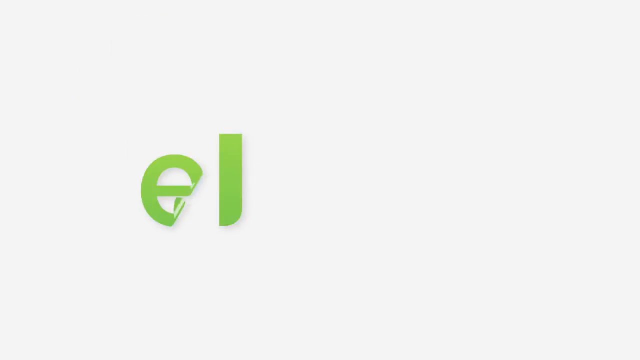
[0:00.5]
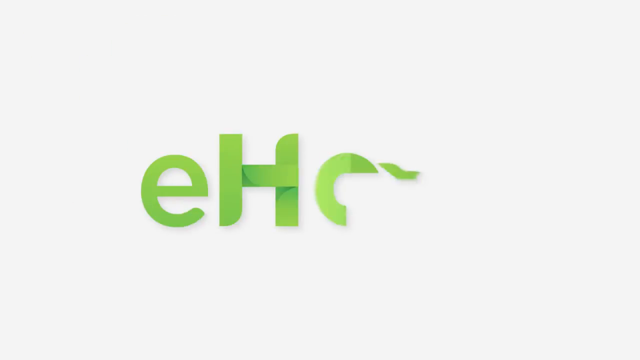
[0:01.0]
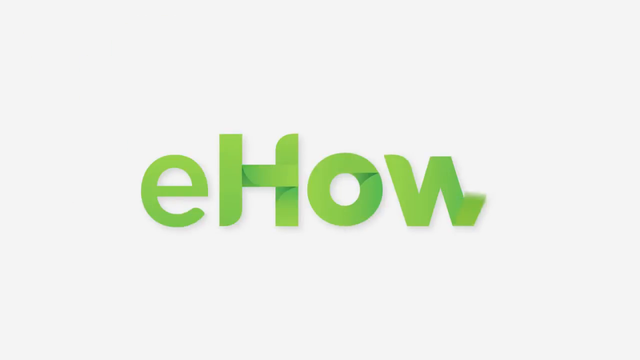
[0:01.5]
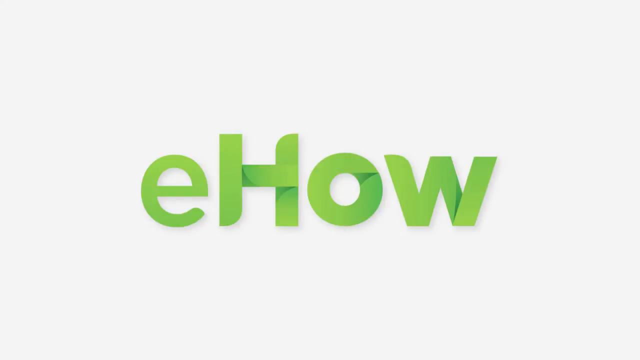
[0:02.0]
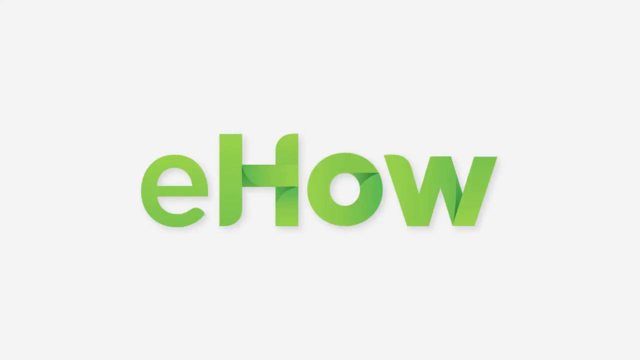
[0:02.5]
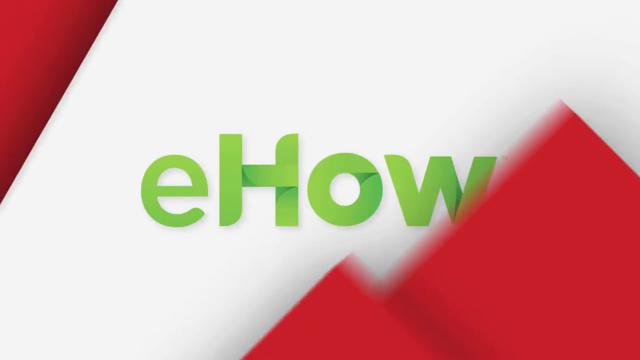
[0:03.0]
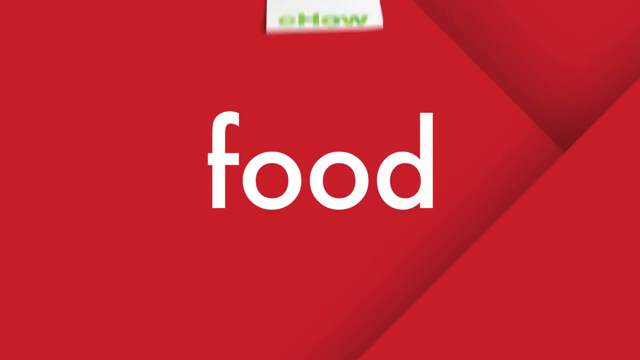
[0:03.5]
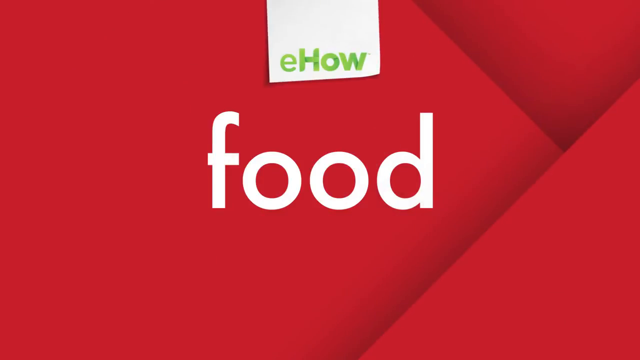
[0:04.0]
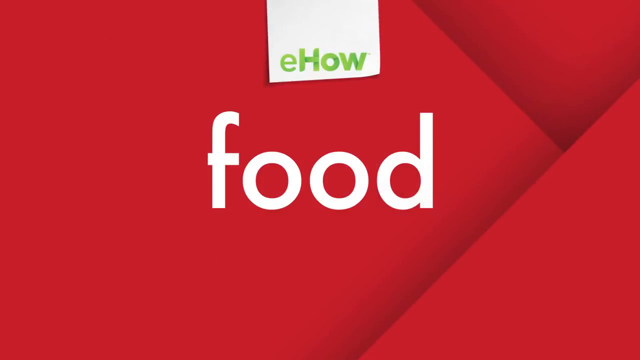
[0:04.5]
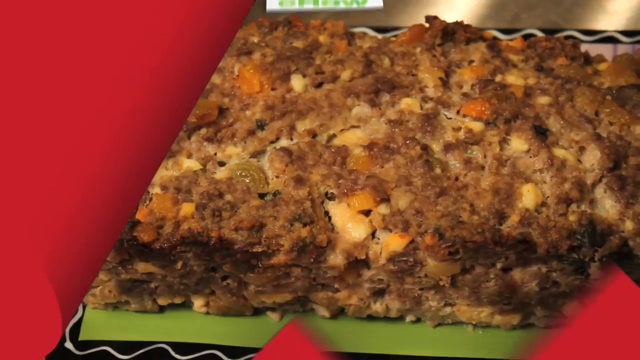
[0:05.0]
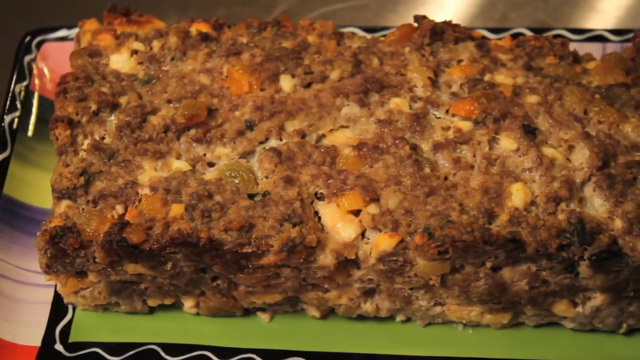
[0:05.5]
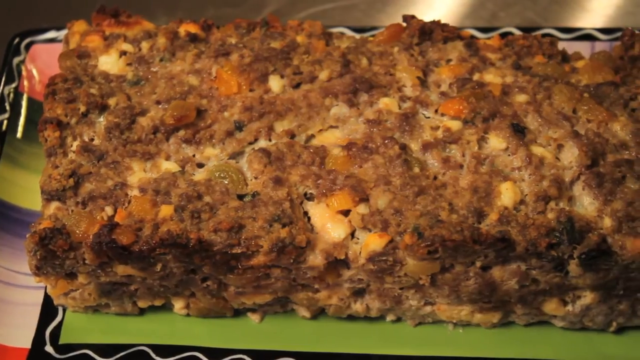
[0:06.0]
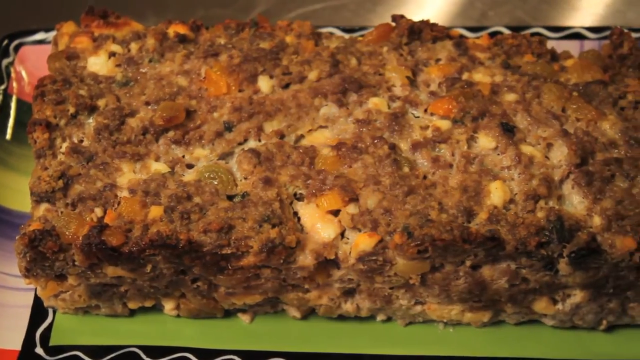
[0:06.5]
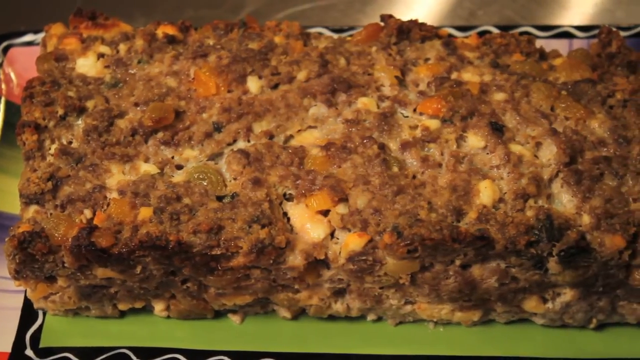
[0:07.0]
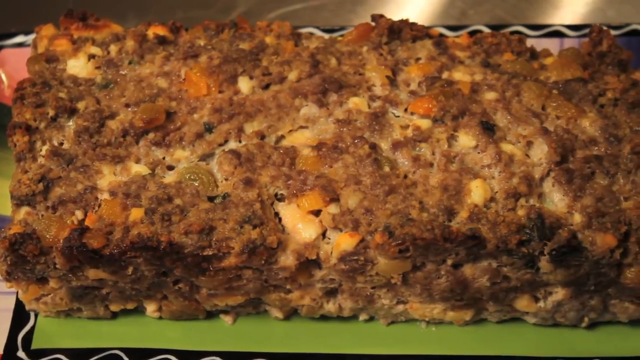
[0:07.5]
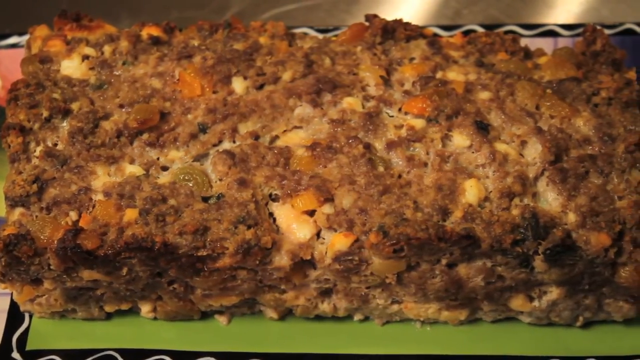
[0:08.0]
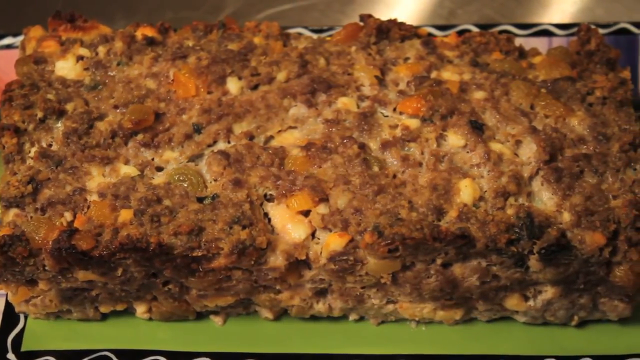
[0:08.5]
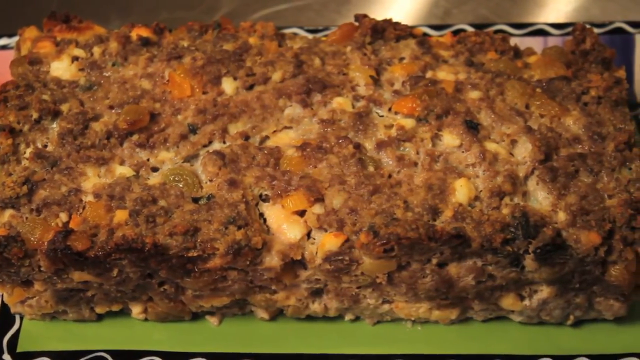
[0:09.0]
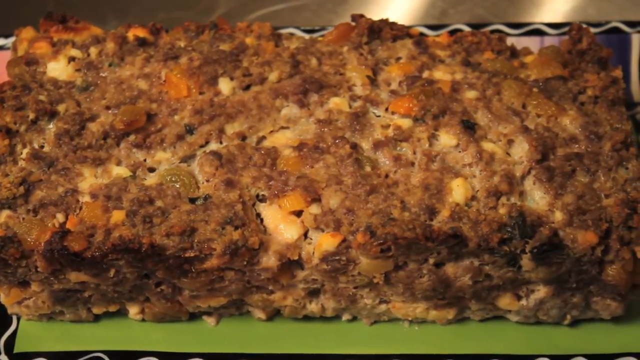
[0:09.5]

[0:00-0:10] The eHow logo appears in a lime green font on a white background. It transitions to a red background that says "food". Next comes what appears to be a lasagna on a table. It looks like a modified lasagna: clearly a layered meal, but apparently a different kind of lasagna, looking more fried and not pasta-based. The dish is on a green and black plate on a table.